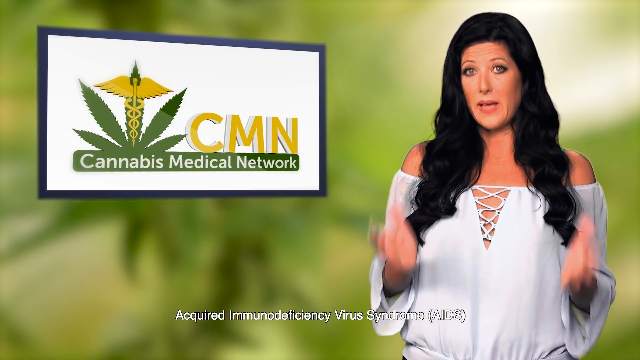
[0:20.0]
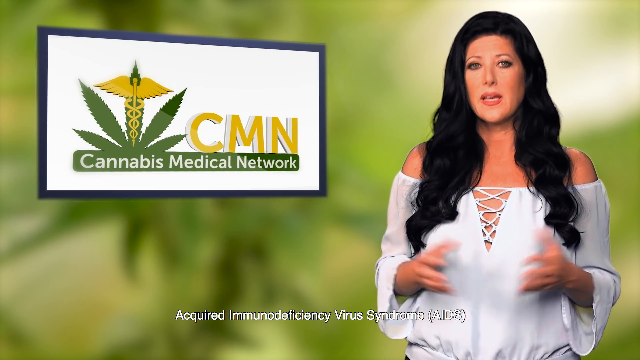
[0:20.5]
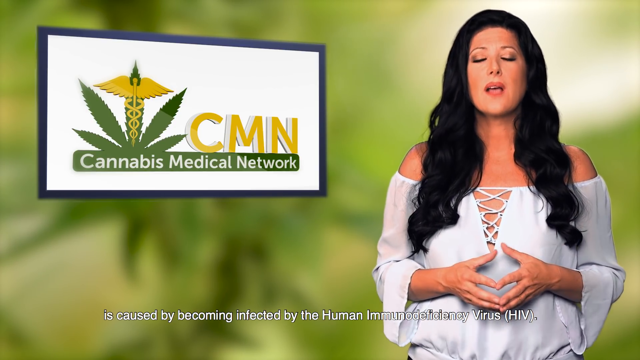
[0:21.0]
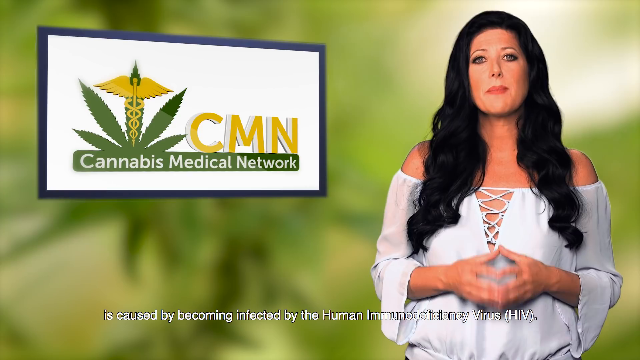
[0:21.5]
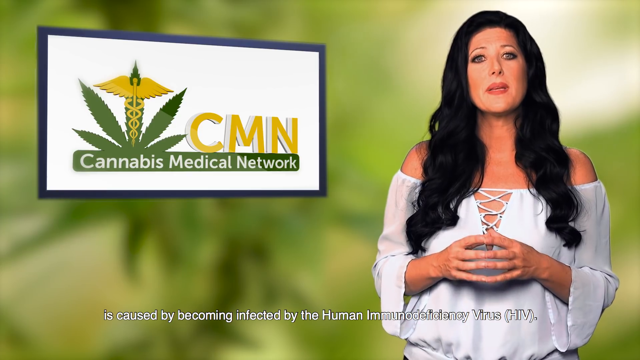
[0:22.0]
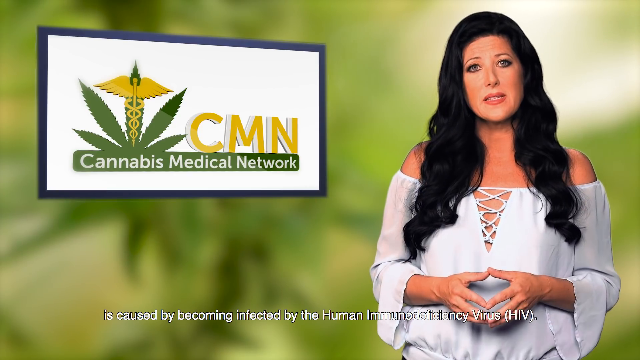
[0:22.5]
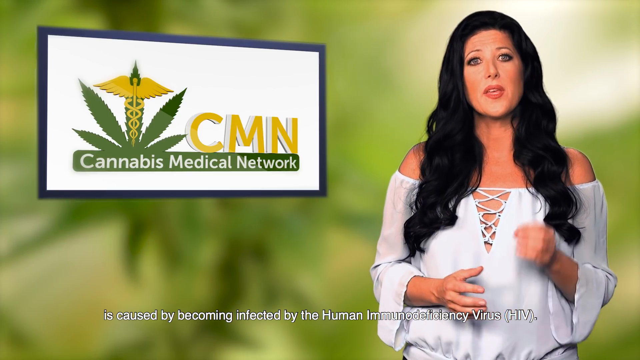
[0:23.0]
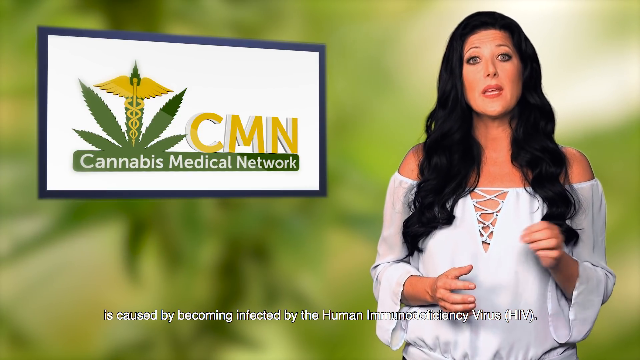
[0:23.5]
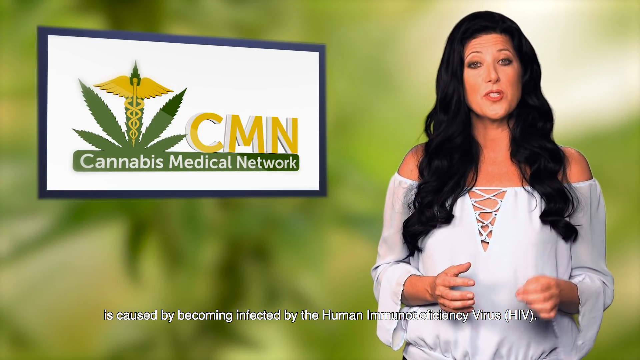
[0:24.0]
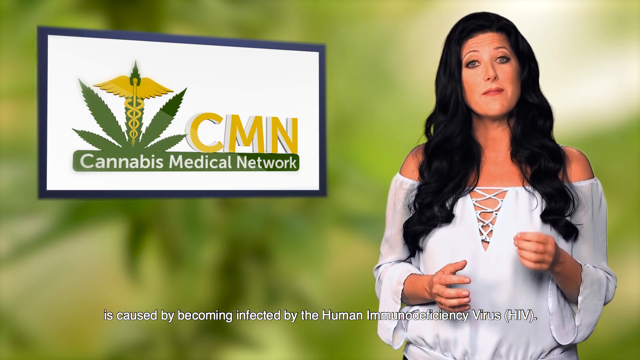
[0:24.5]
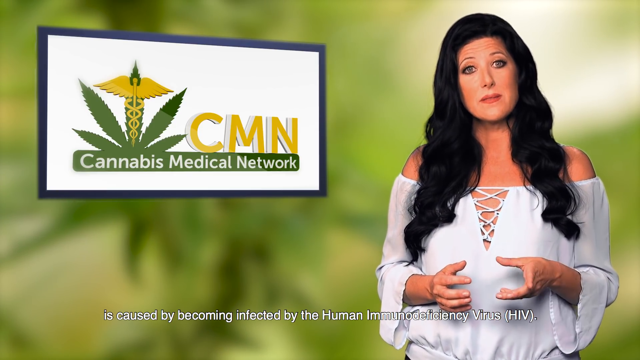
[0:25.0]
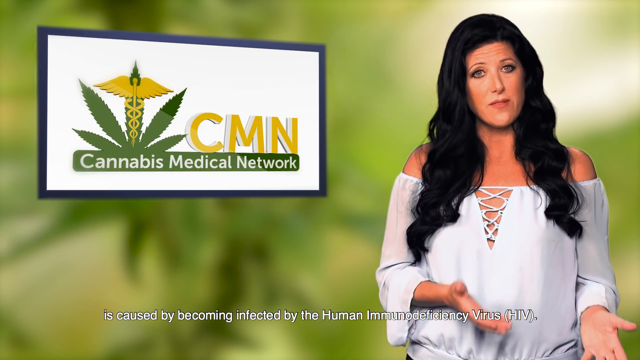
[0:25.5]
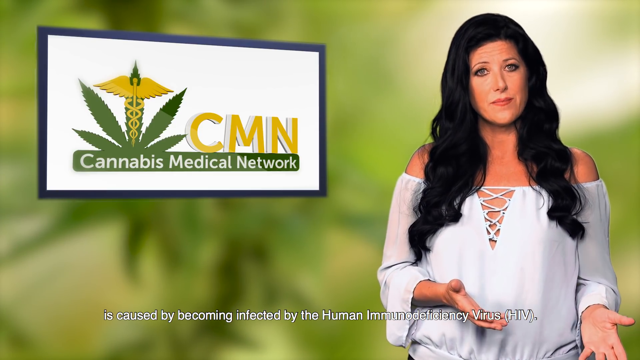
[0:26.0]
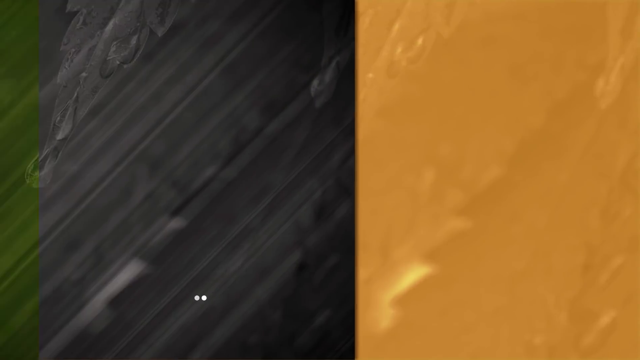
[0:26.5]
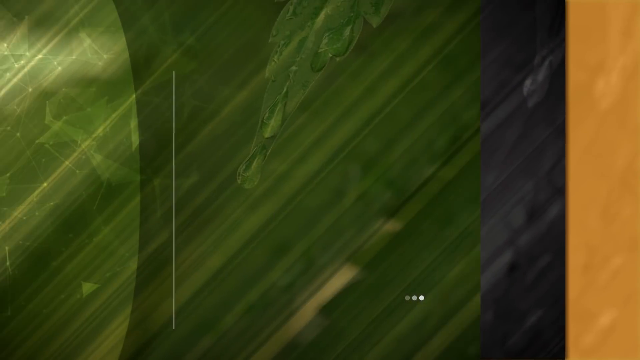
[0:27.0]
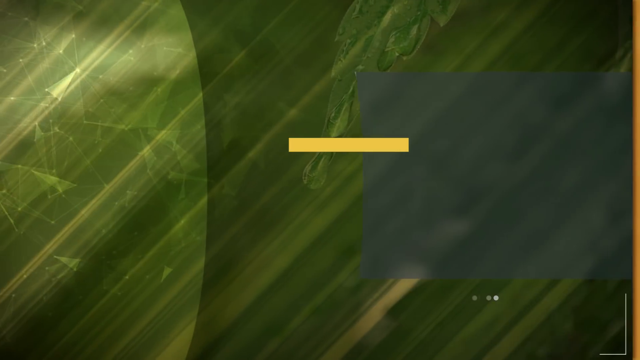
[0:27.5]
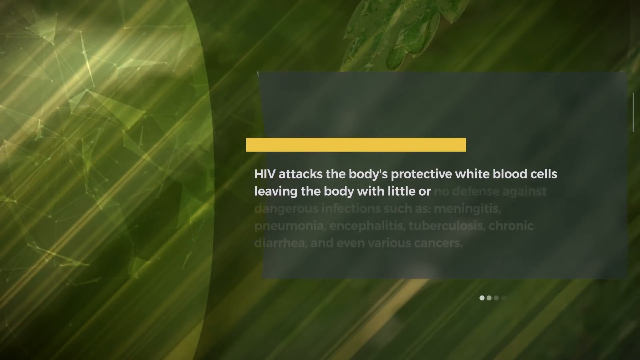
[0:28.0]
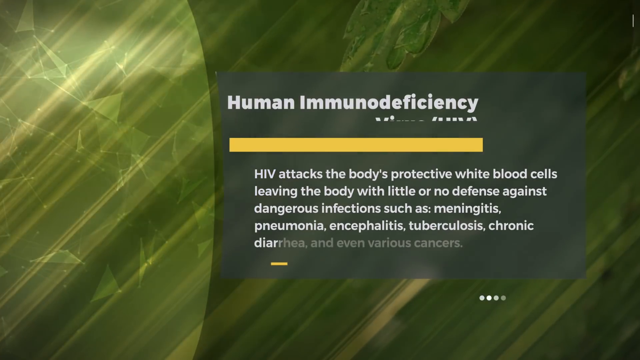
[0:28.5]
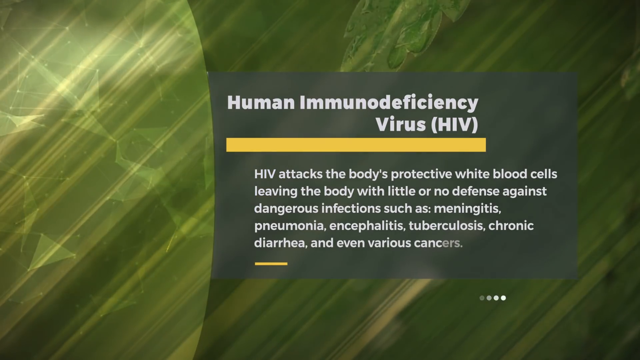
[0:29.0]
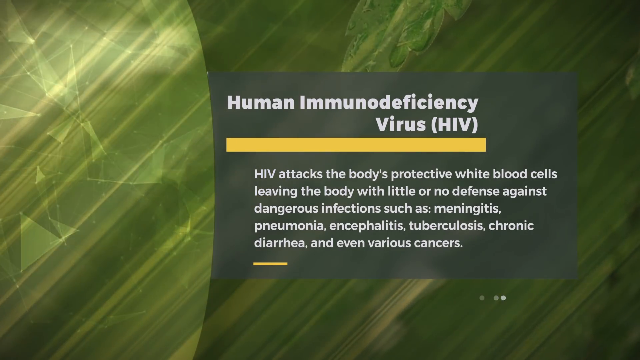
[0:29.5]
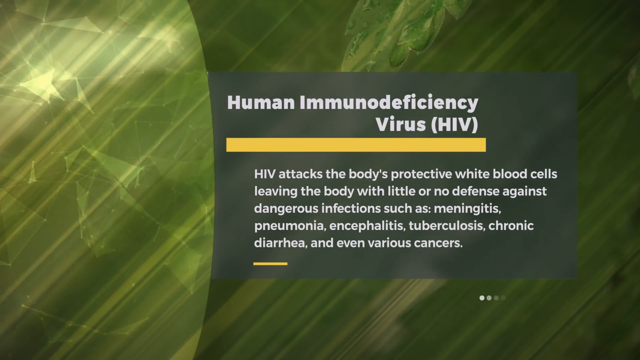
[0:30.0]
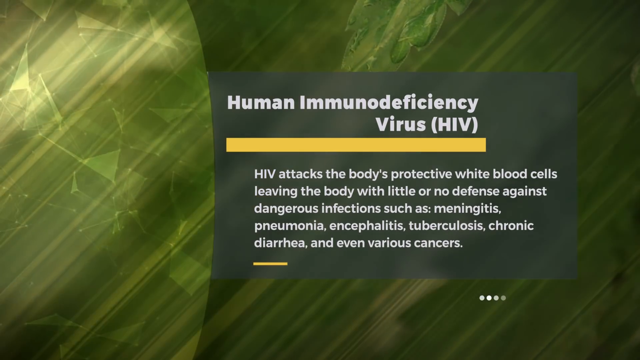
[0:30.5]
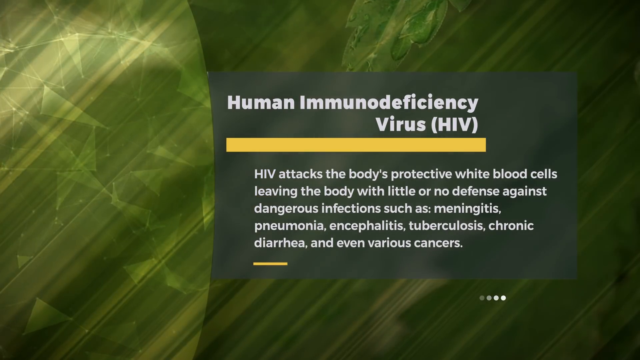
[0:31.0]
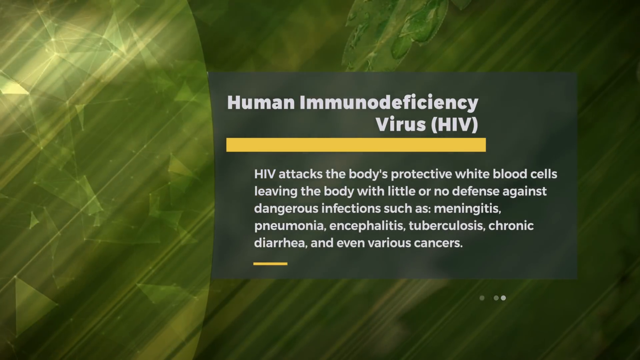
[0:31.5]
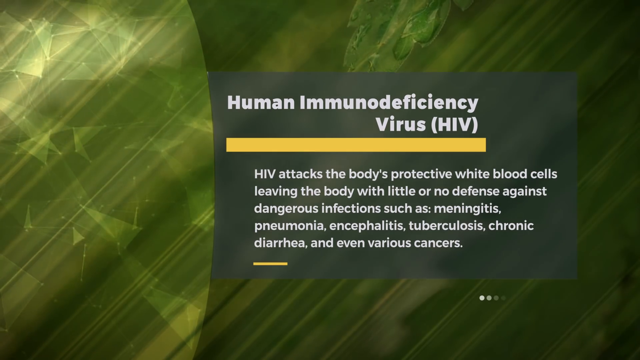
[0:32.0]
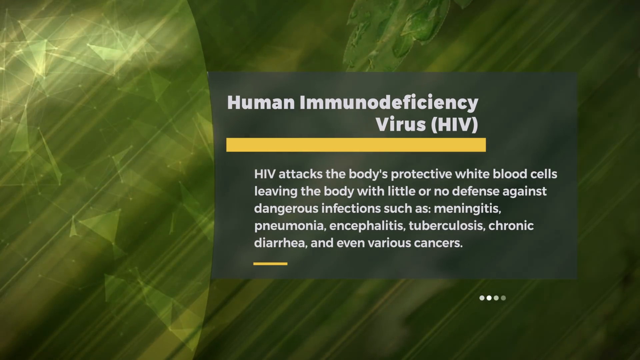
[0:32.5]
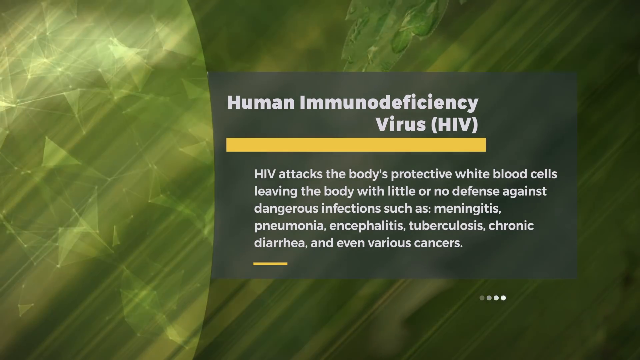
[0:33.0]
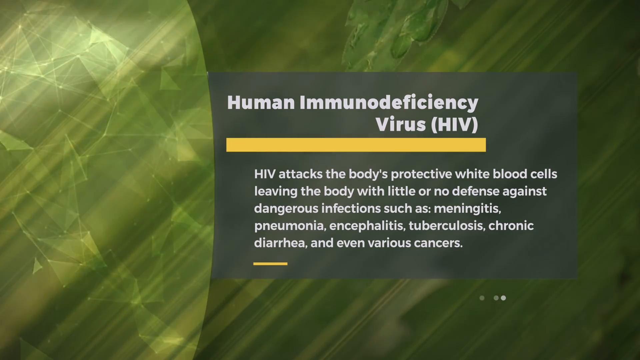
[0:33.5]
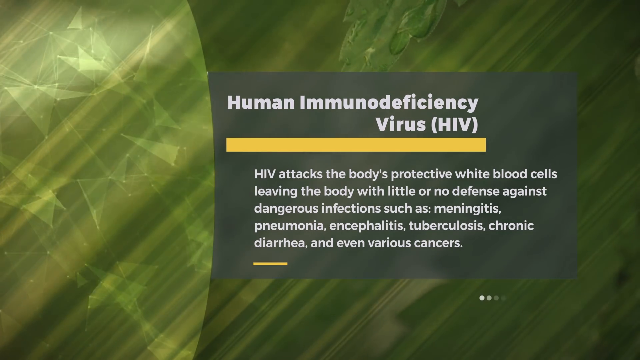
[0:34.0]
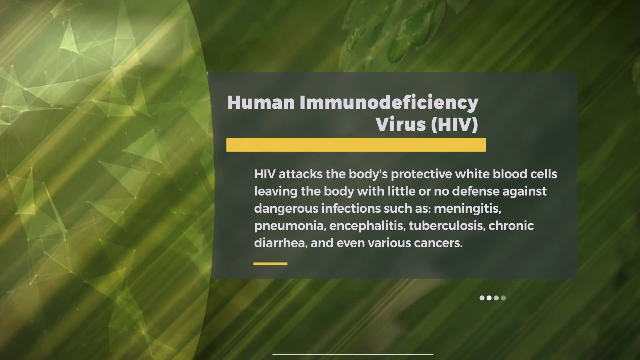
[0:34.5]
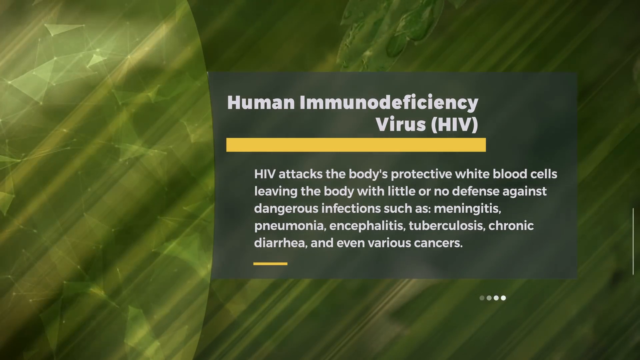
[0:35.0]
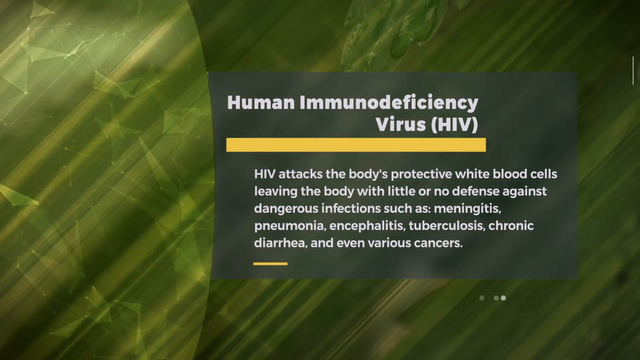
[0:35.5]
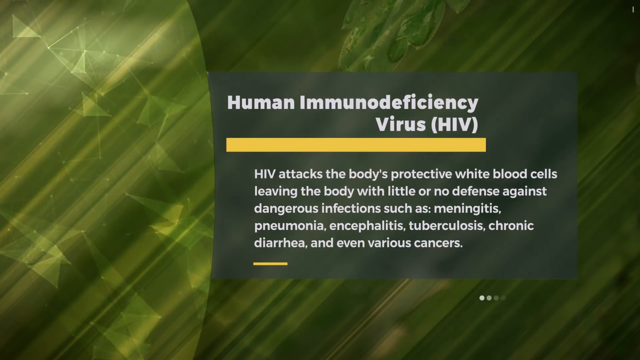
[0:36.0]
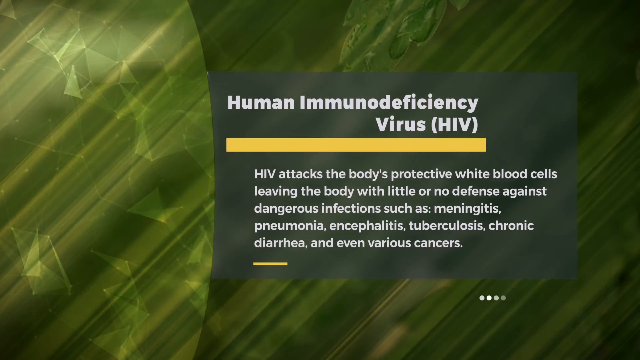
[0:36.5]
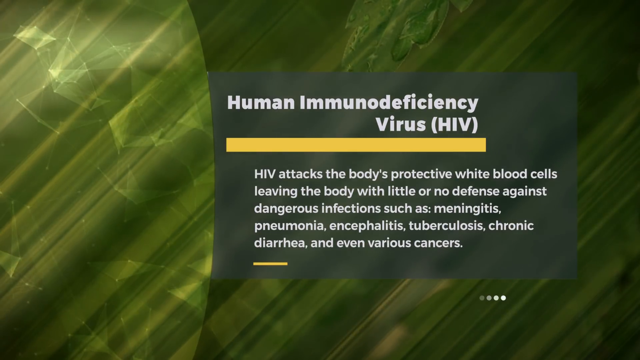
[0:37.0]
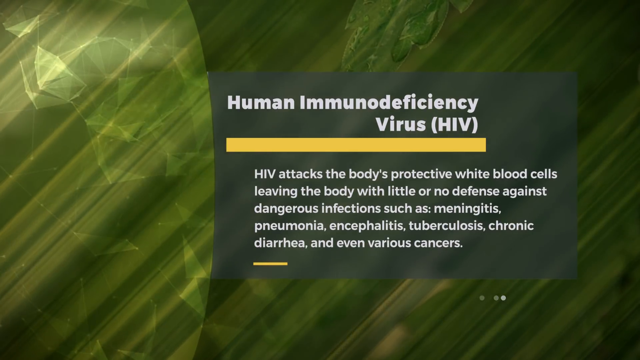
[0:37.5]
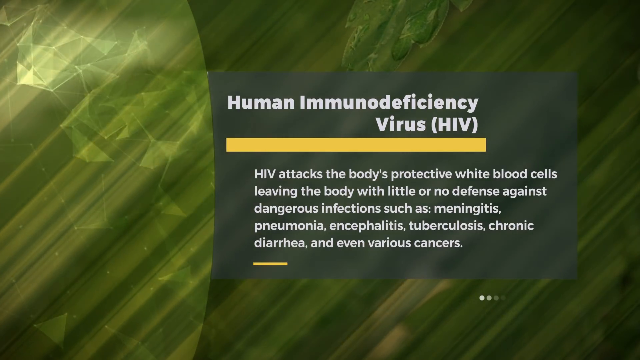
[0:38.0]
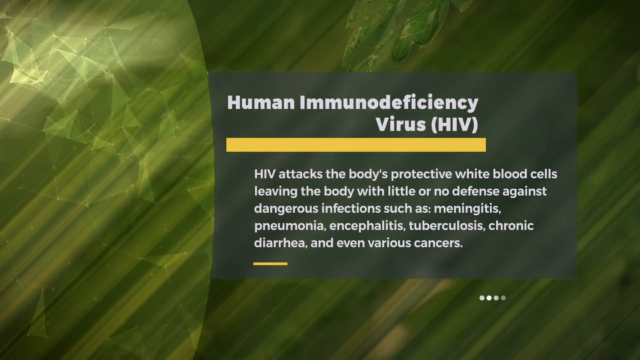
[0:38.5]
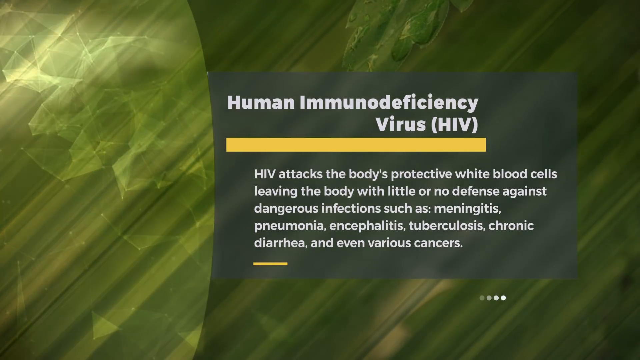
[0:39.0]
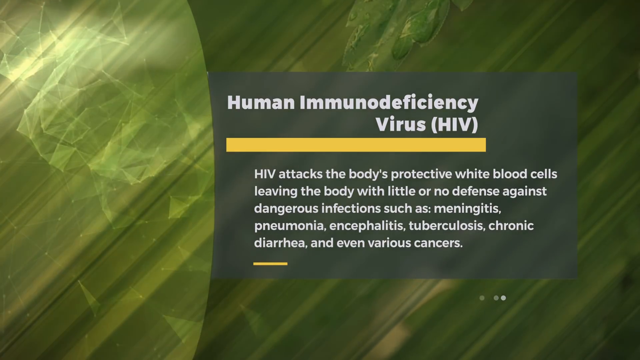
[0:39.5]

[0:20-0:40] The woman says, "It's caused by becoming infected by the human immunodeficiency virus, HIV." The video then moves to an all-green screen that looks a little animated in the background. The words kind of phase in: first the title "human immunodeficiency virus HIV," then a short description reading "HIV attacks the body's protective white blood cells leaving the body with little or no defense against dangerous infections such as meningitis, pneumonia, encephalitis, tuberculosis, chronic diarrhea, and even various cancers." A loading bubble appears at the end.